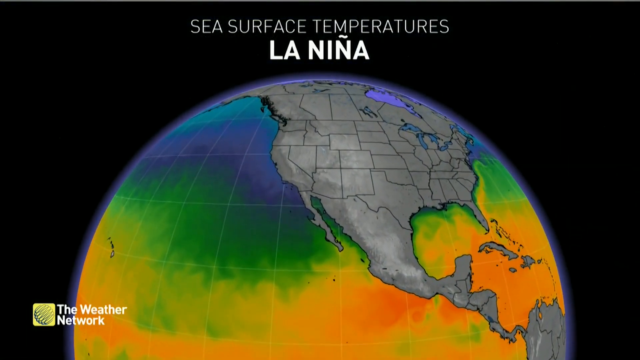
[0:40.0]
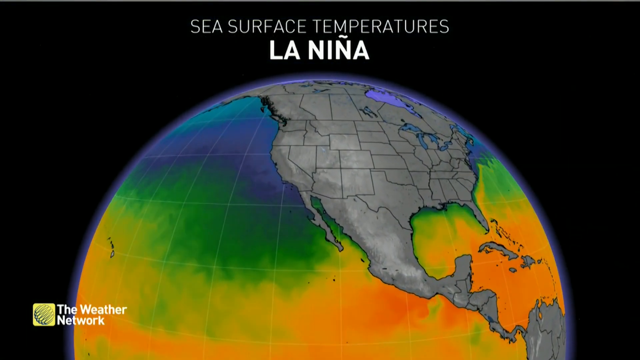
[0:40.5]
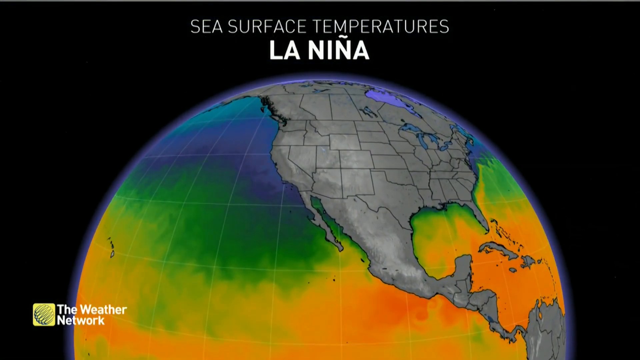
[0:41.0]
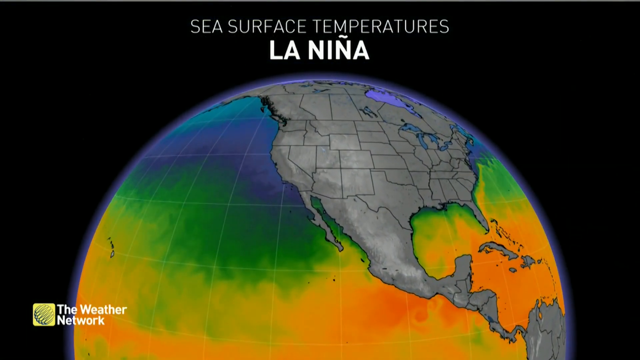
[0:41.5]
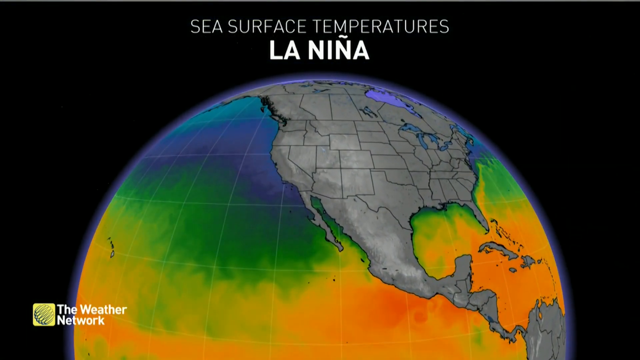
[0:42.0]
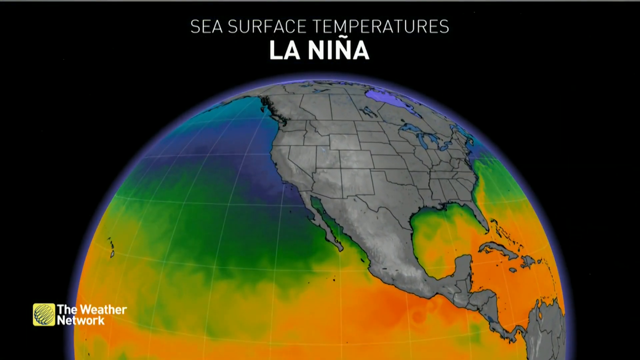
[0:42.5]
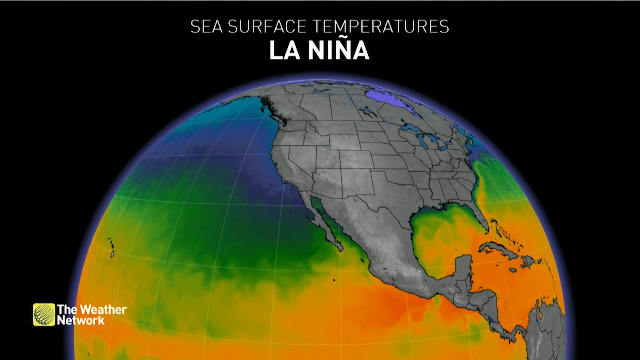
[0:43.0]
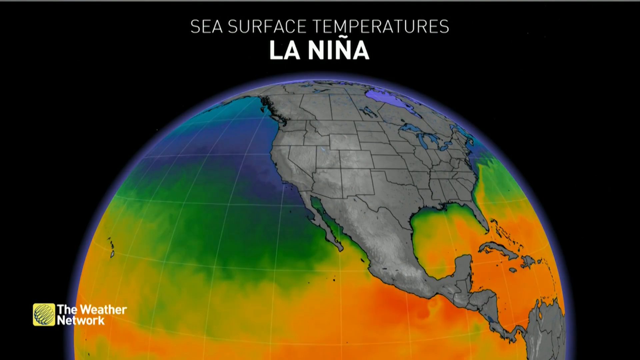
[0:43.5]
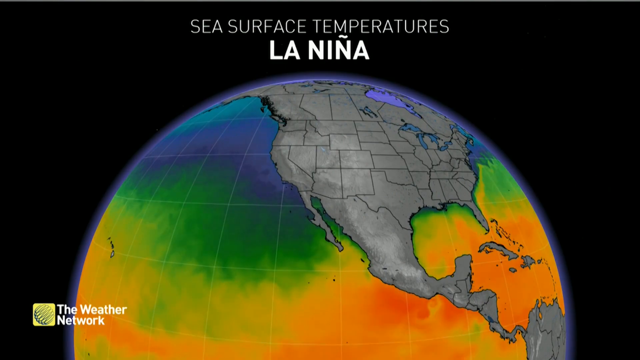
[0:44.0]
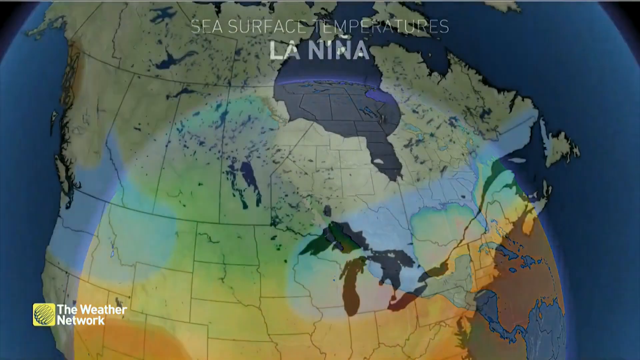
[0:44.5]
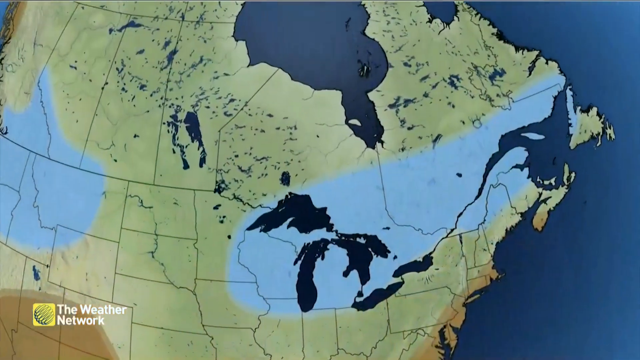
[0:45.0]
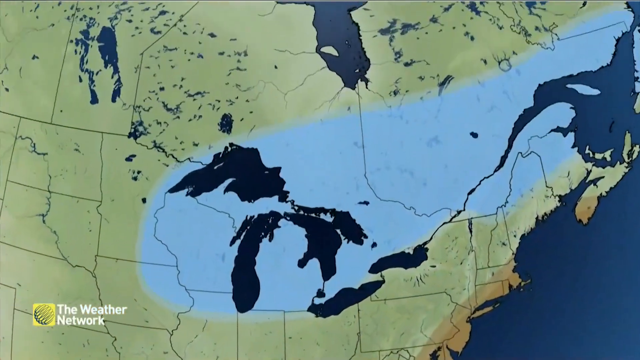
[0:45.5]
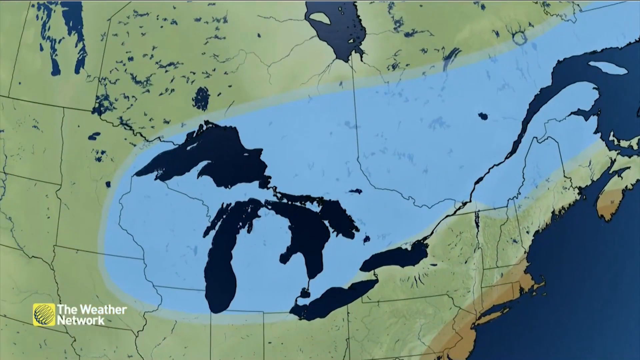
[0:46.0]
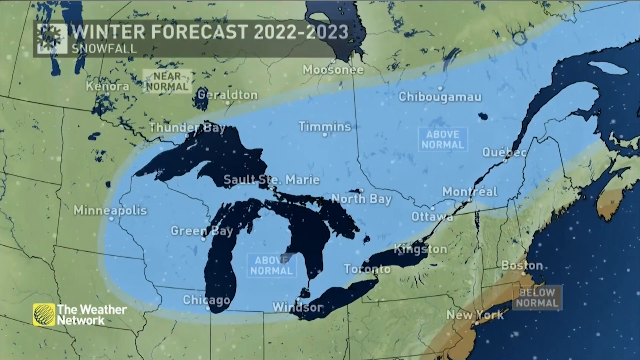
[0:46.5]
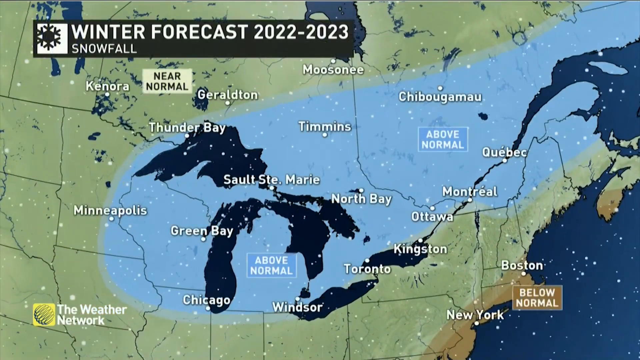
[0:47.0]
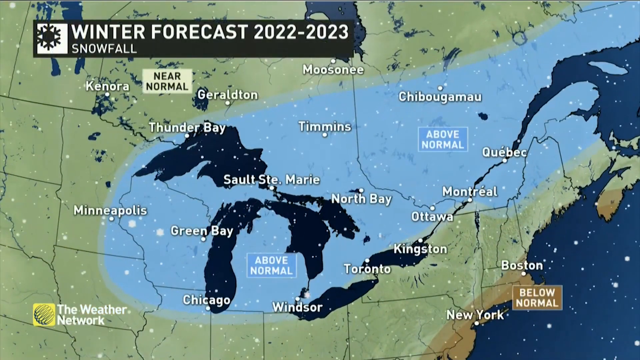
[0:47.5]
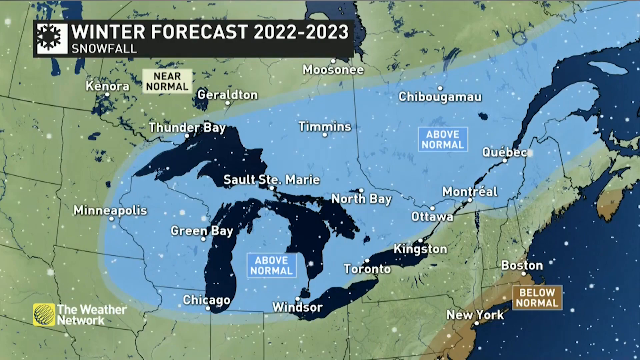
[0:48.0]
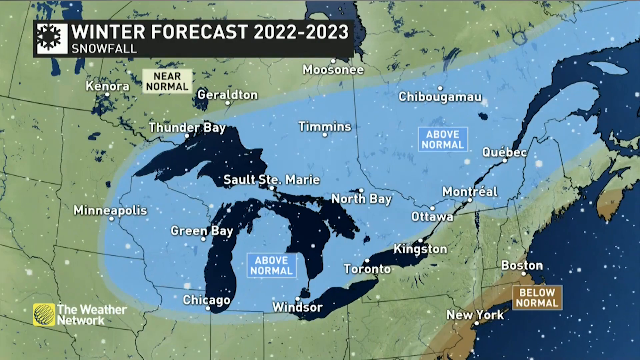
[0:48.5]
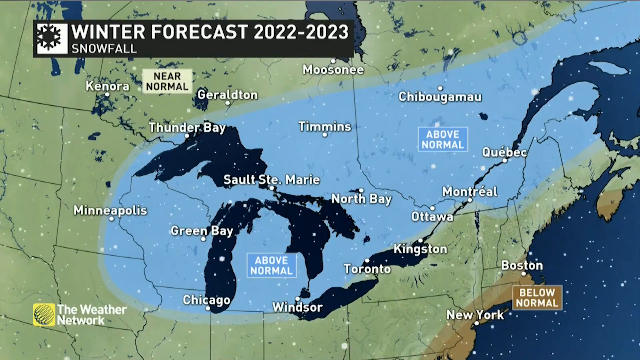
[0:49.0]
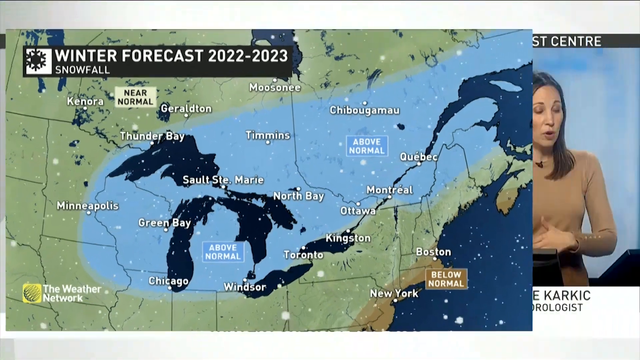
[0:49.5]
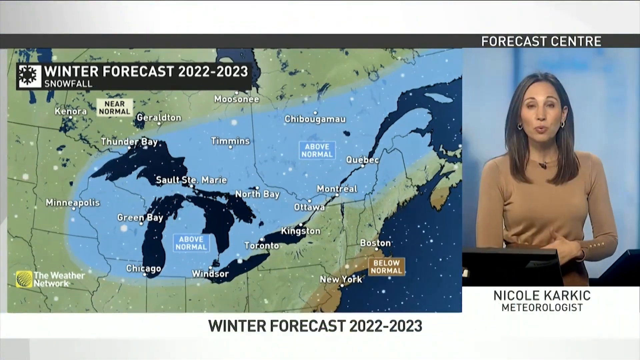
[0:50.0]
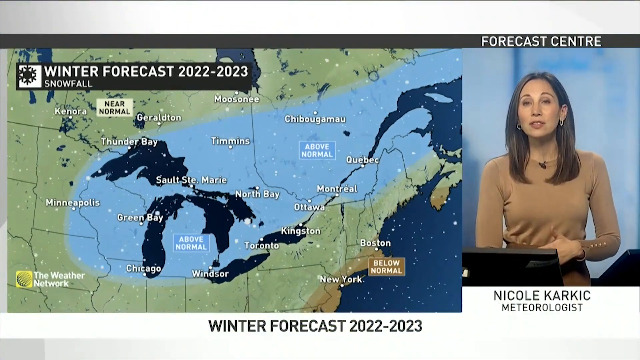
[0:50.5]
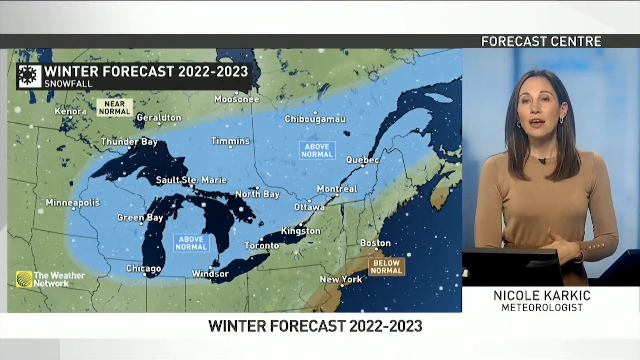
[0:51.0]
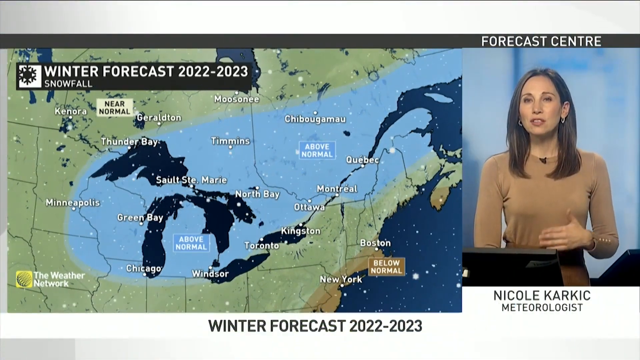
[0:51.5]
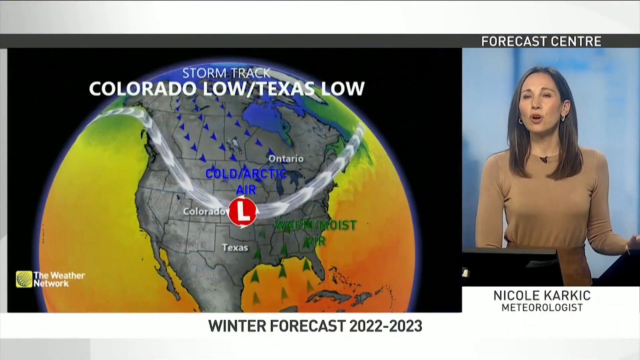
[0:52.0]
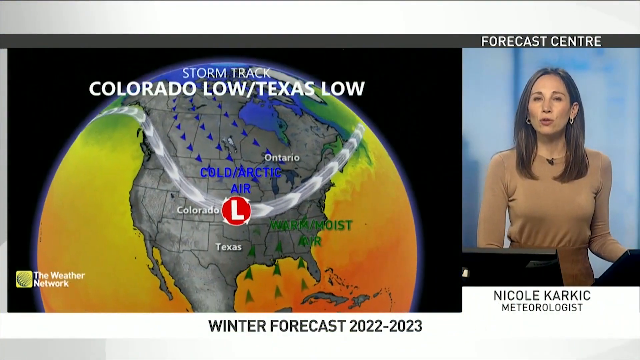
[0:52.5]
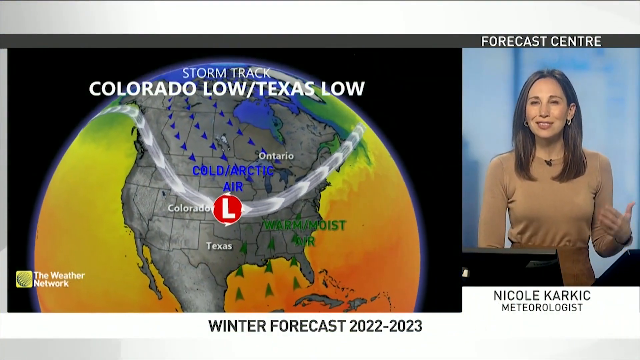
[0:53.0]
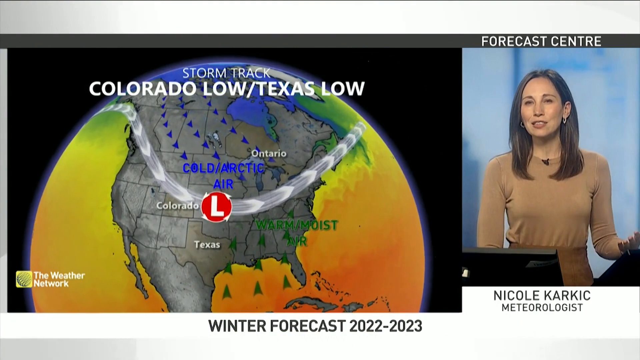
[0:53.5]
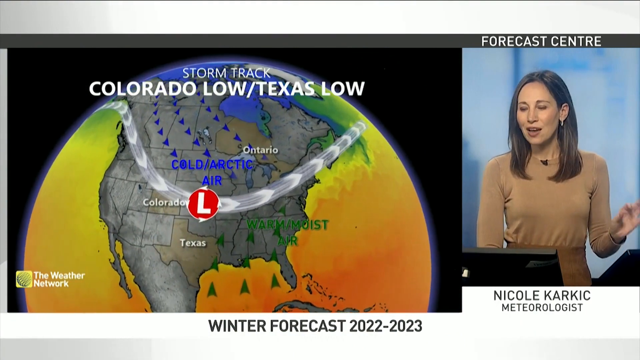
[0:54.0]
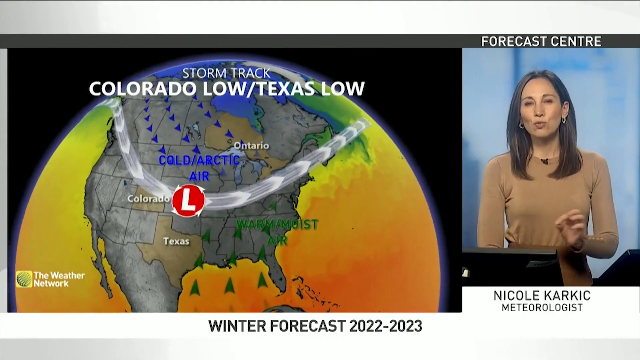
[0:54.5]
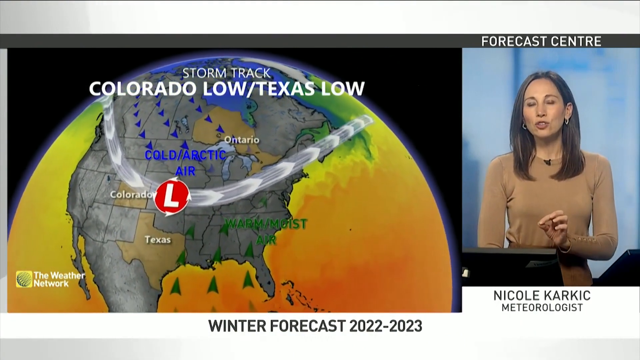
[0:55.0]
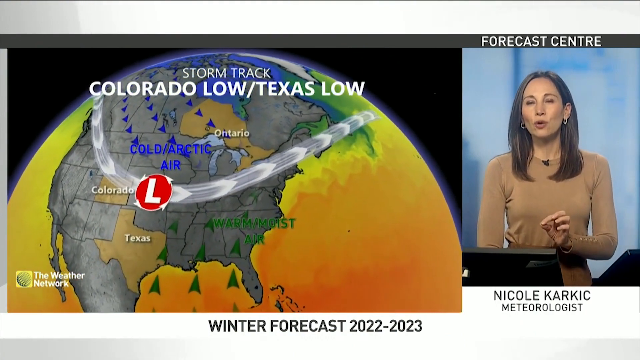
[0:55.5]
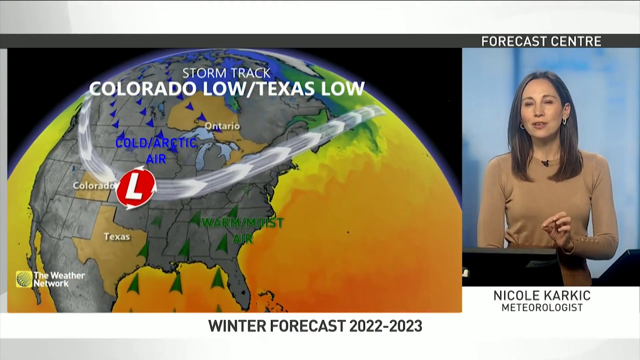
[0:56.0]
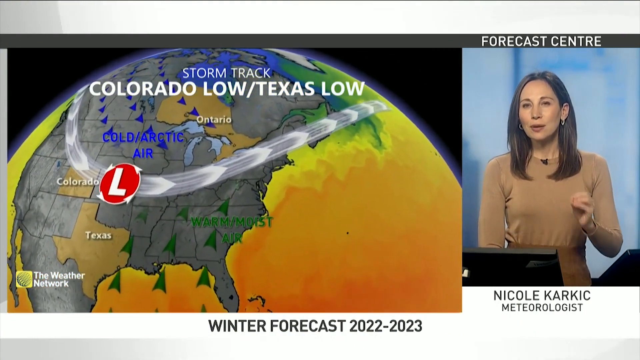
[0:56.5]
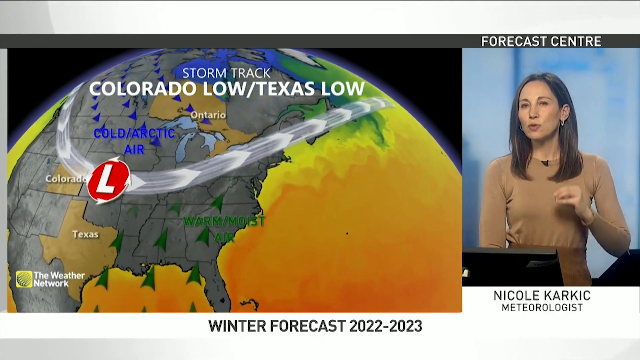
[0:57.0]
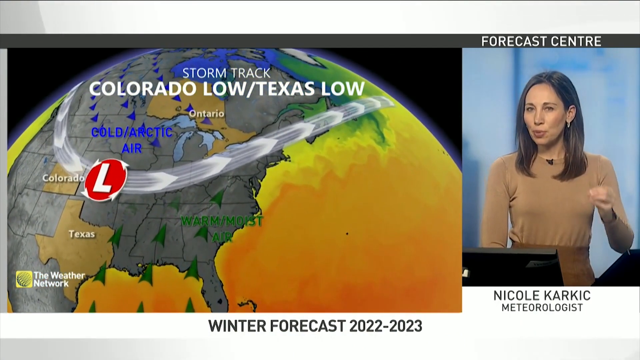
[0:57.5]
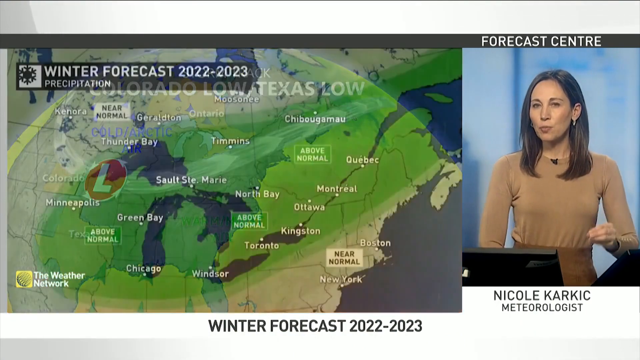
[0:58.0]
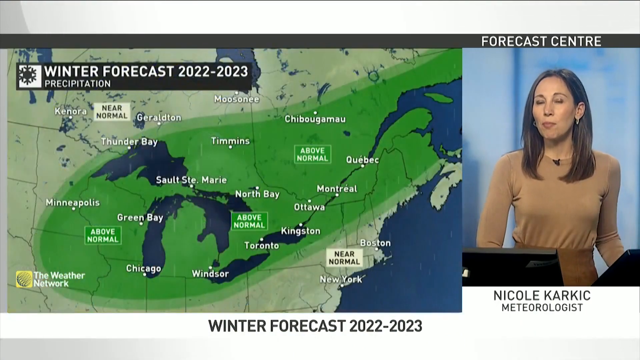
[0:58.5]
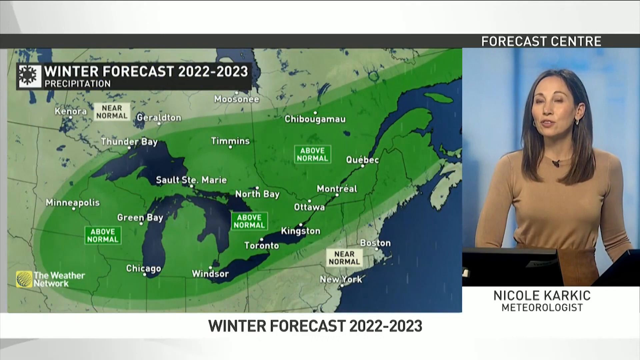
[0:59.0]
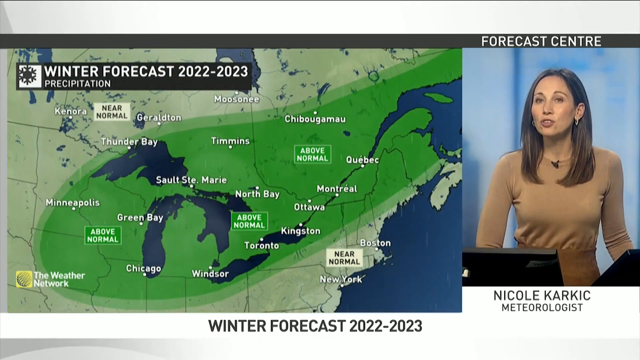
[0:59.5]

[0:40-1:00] A world map shows sea surface temperatures and La Nina, with areas colored green and red that may be the weather forecast. Text reads "winter forecast 2022 2023", with labels "Colorado low" and "Texas low". A woman describes the weather; her name appears to be Nicola Carlic or something similar.